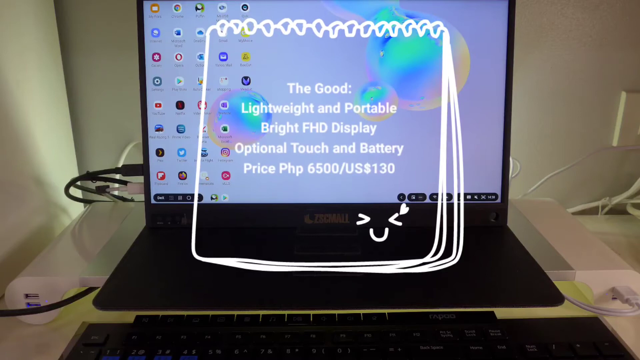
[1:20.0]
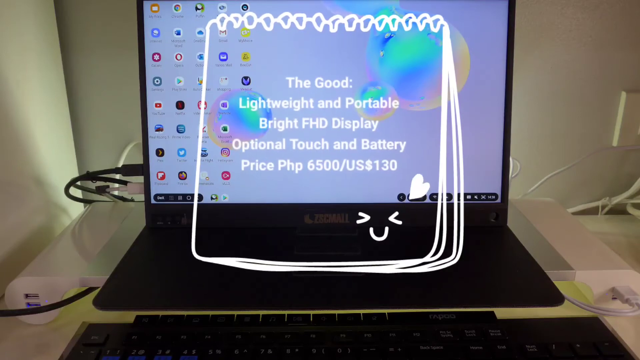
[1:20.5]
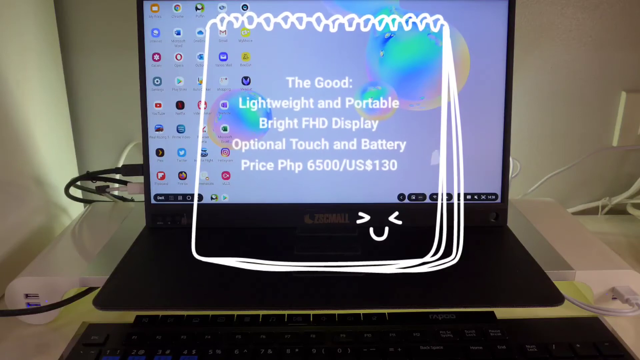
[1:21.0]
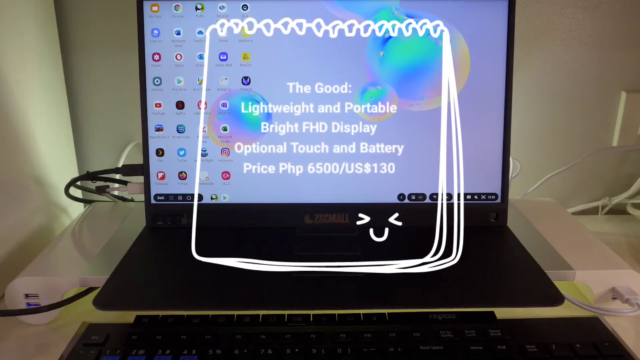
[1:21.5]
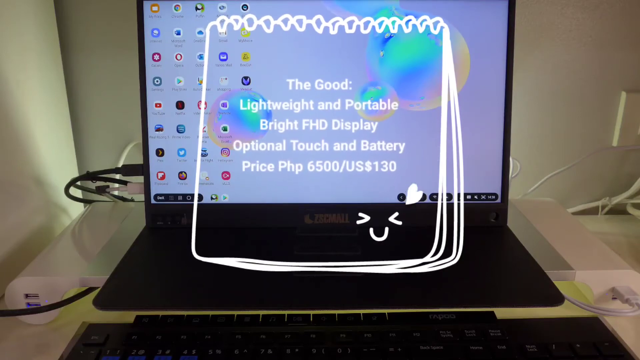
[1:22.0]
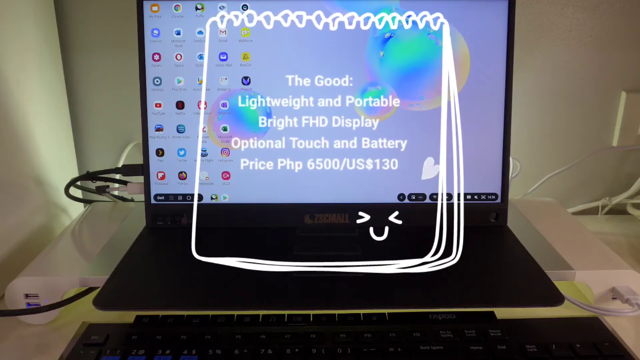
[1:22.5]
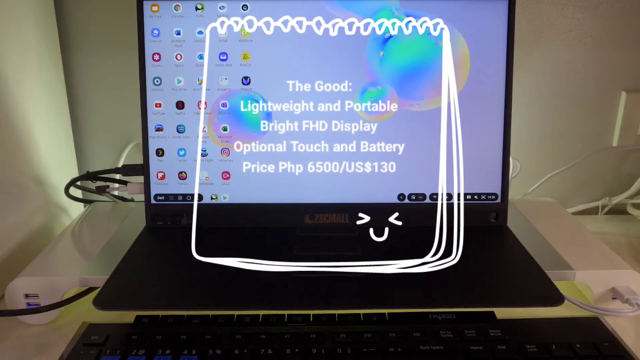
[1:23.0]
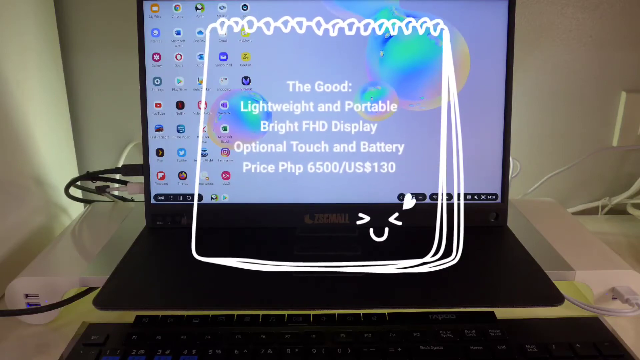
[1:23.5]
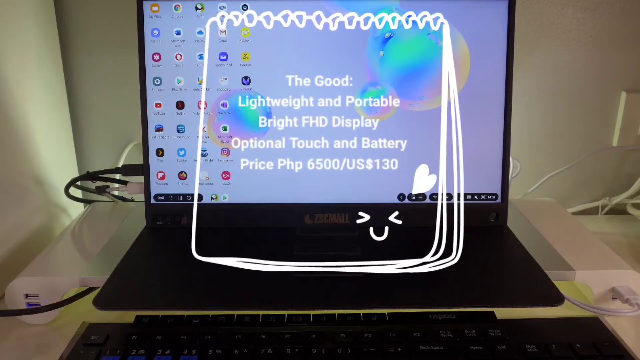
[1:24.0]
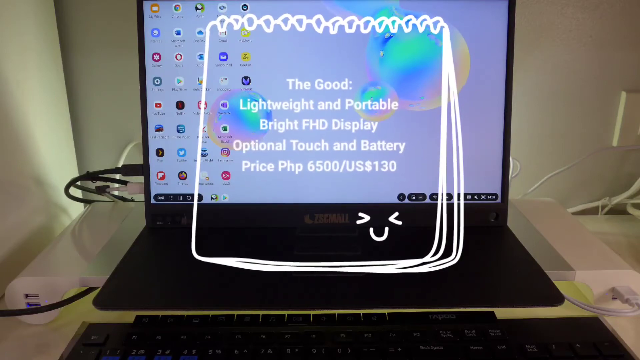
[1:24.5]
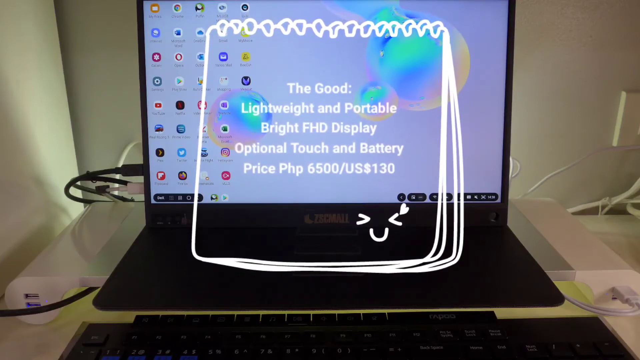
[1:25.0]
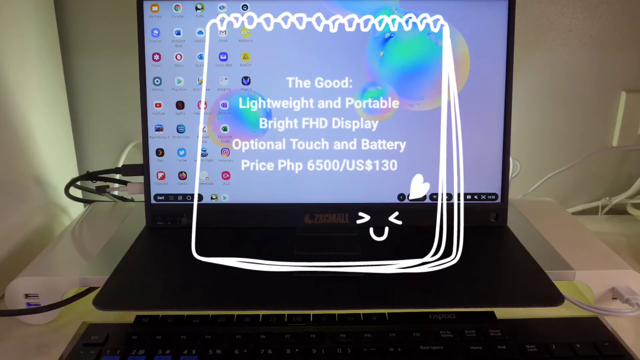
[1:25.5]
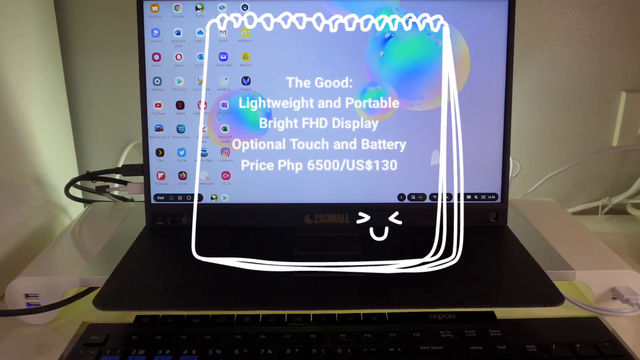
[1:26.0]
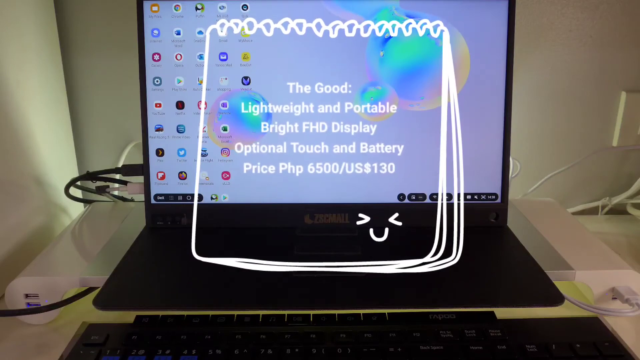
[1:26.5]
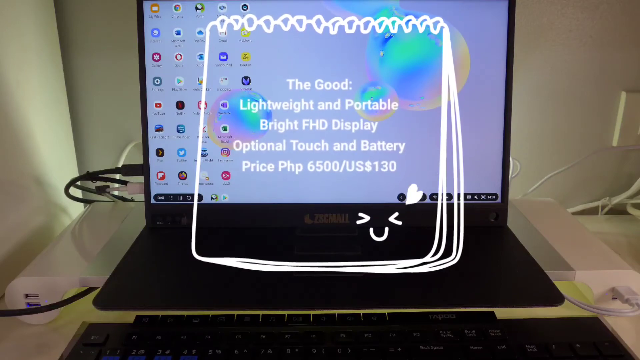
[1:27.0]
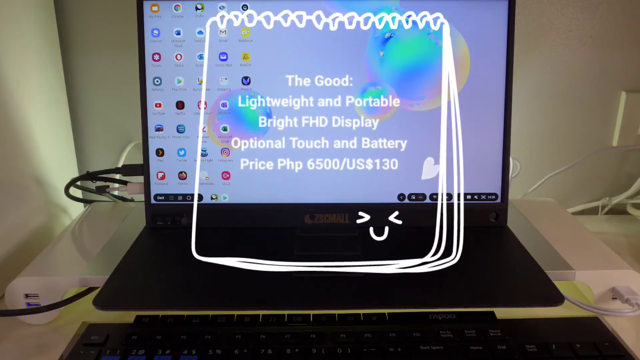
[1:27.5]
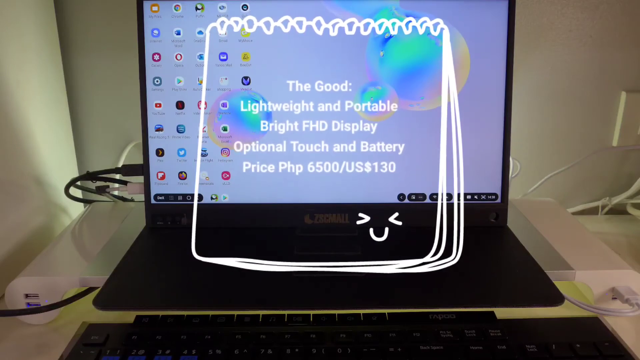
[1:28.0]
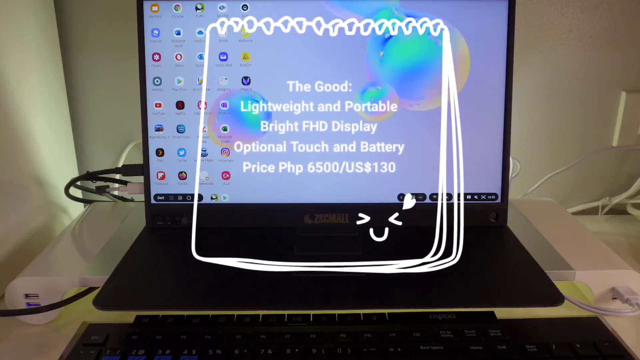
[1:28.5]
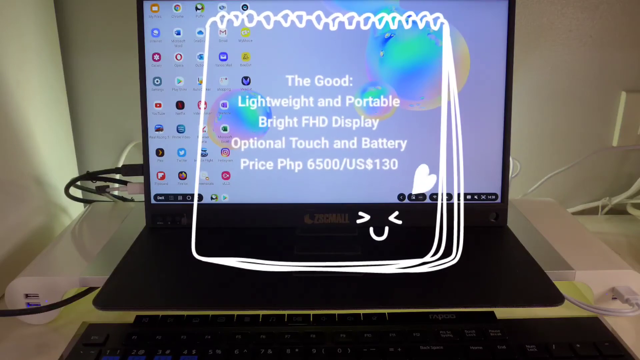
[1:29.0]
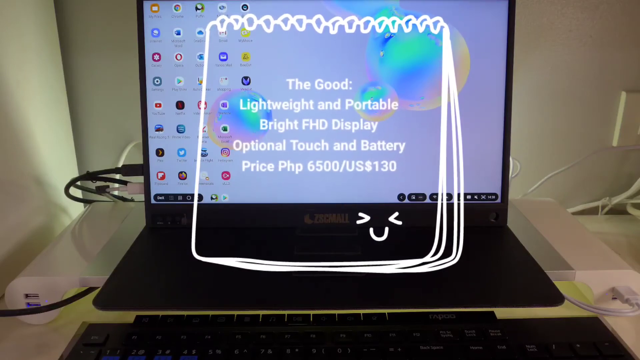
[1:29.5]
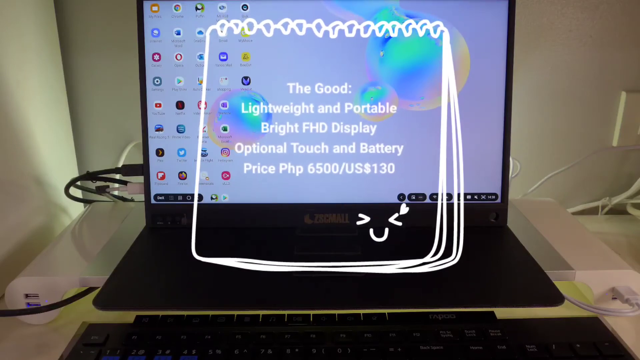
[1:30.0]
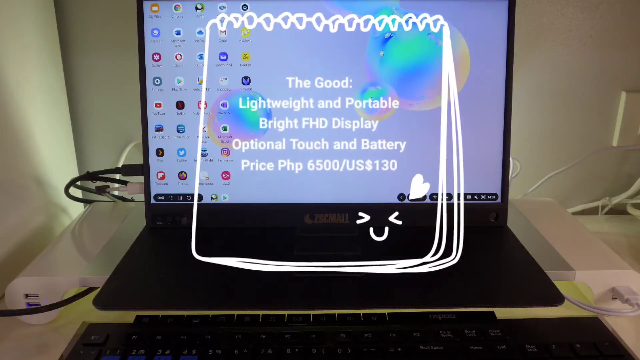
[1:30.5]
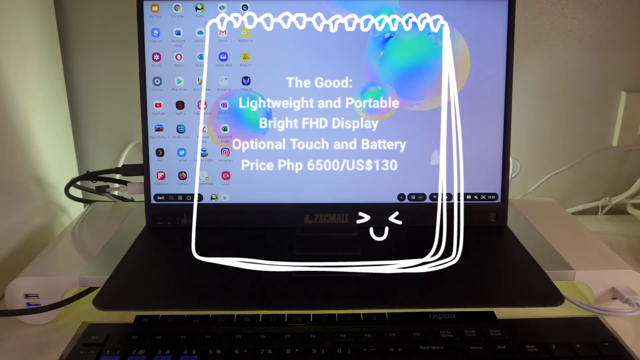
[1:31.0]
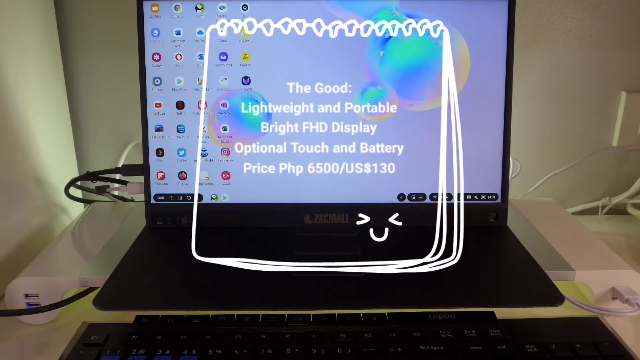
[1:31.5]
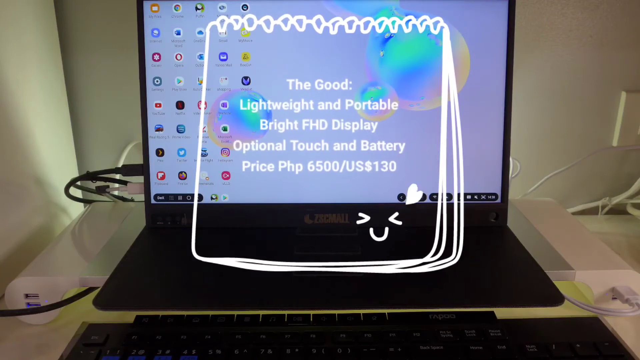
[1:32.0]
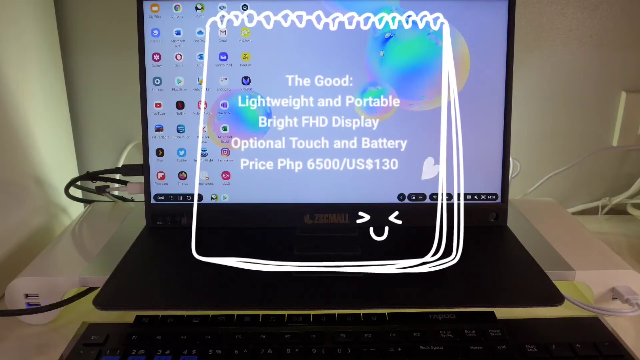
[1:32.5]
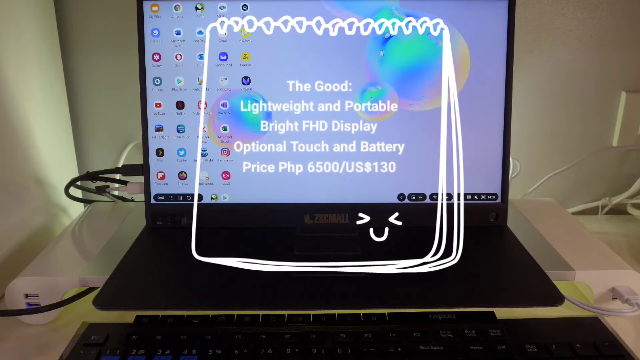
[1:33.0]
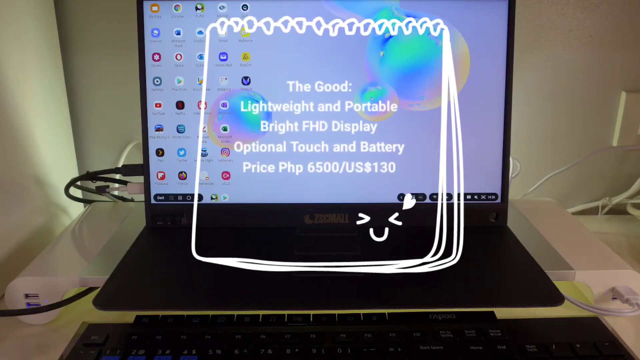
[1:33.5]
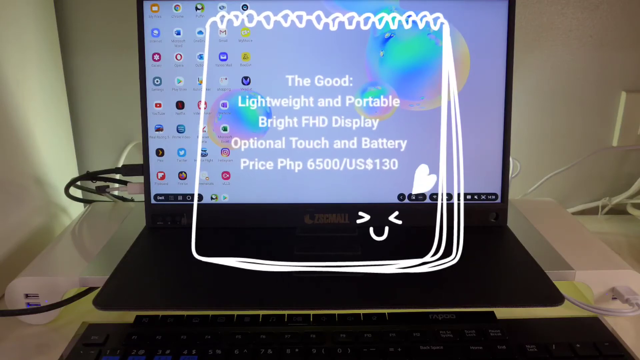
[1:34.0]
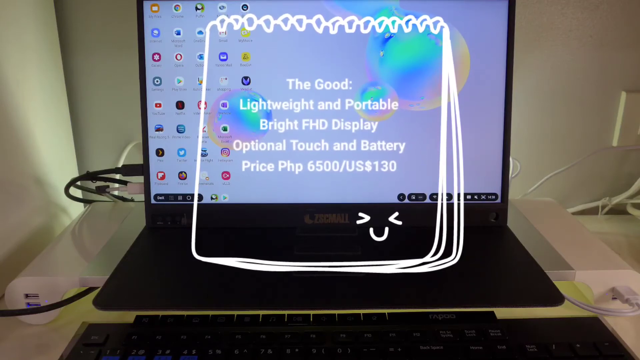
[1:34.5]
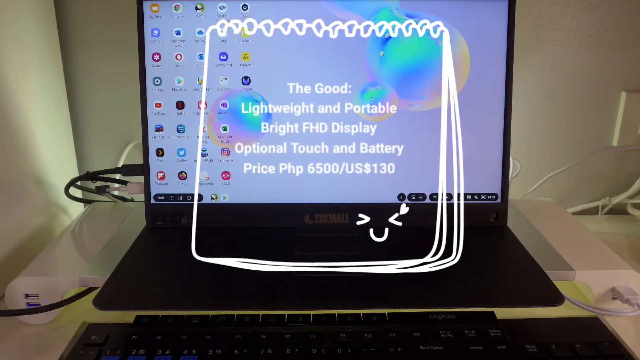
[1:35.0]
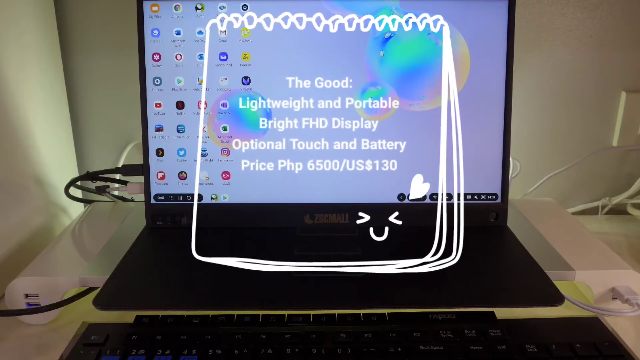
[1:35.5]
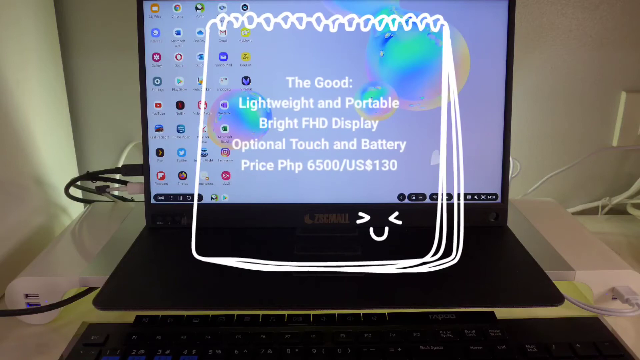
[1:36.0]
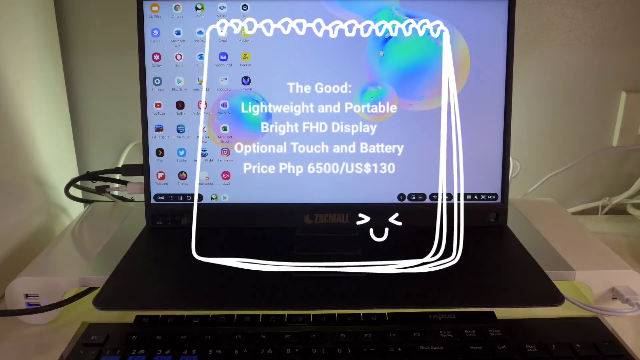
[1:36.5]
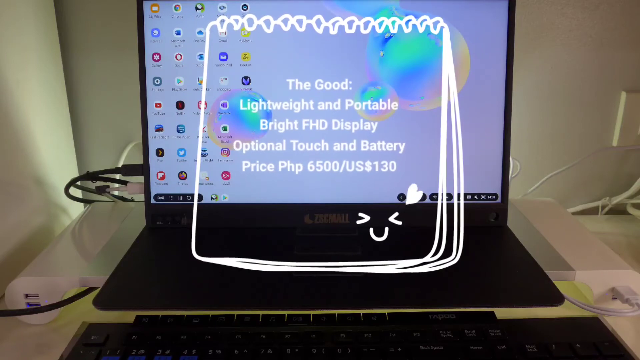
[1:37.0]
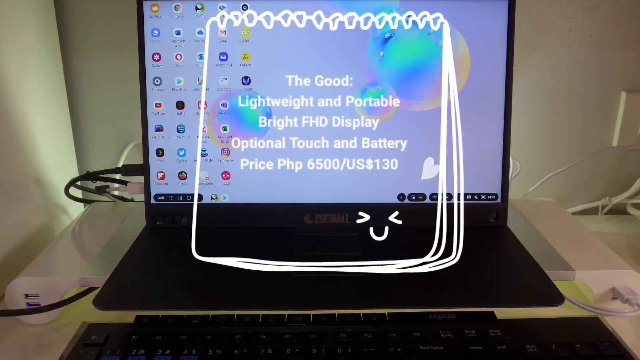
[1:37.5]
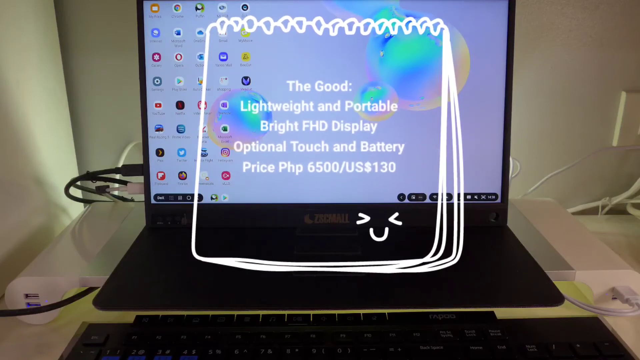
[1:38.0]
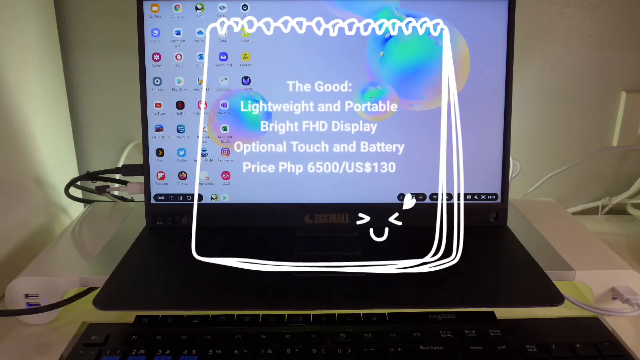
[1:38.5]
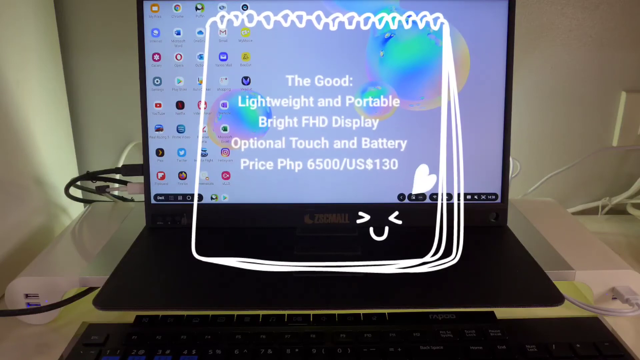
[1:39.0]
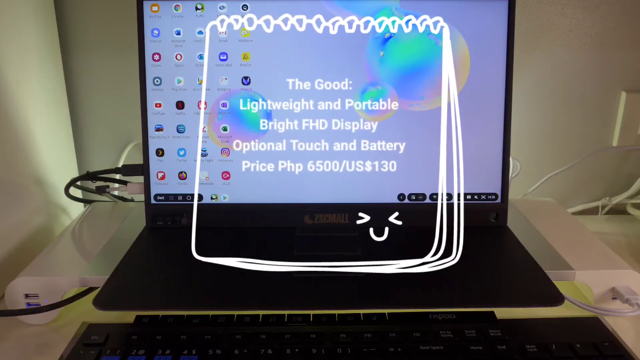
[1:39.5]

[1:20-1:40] What is presumably a tablet faces the viewer, its screen showing about five columns of icons and bubbles for the wallpaper. Some sort of black stand, pretty much flat, is below it, wires come out of its left side, and it is on some sort of white table. An overlaid graphic then appears over the front of it: a white outline of a cartoon notepad with text in the middle reading "the good lightweight and portable bright FHD display, optional touch and battery price, PHP 6500 / us $130". A little smiley face in the lower right has a graphical heart that keeps coming out from it, and the whole graphic is kind of pulsing over the screen. In the background are off-white walls, both the left wall and the back wall, and some other wires kind of behind the table in the center-right area.